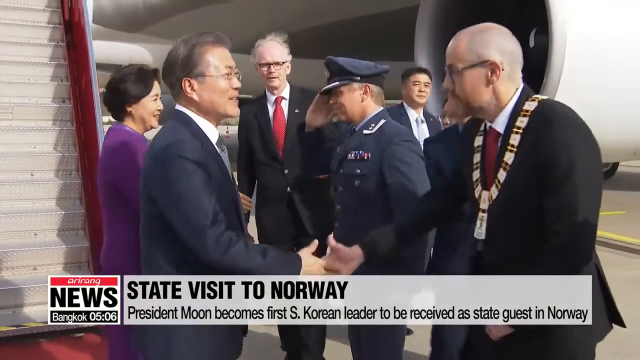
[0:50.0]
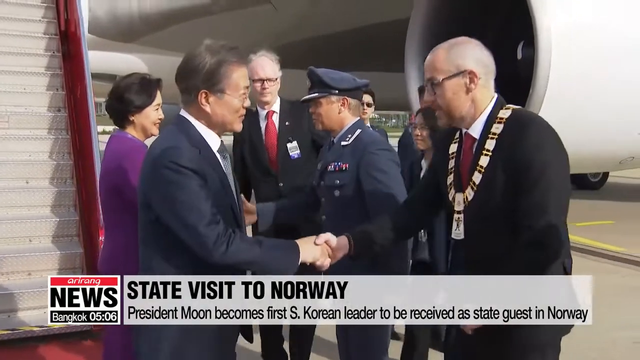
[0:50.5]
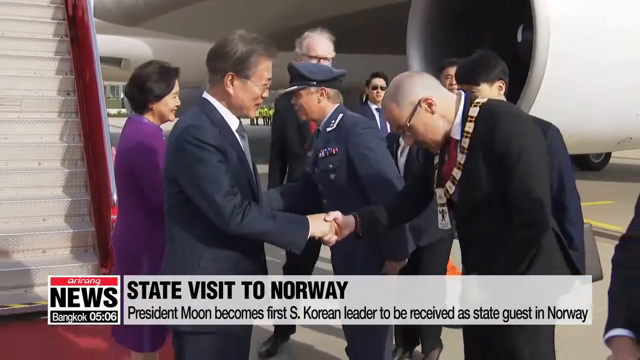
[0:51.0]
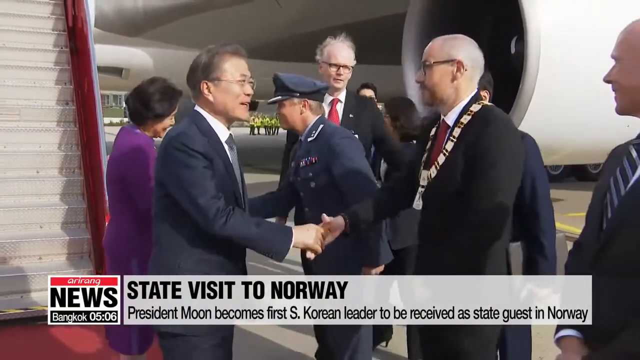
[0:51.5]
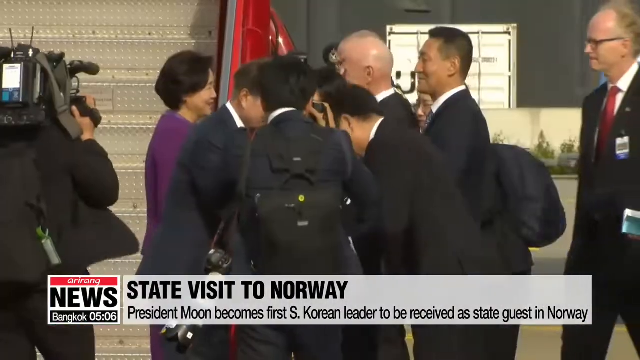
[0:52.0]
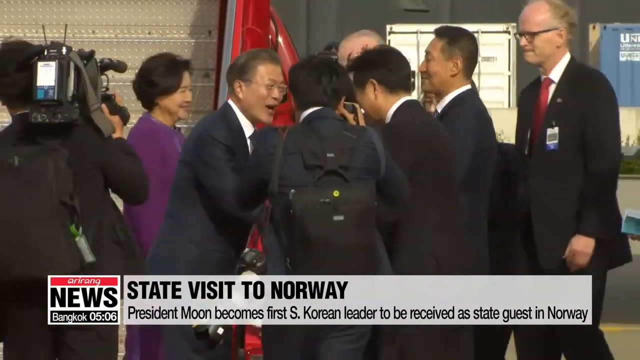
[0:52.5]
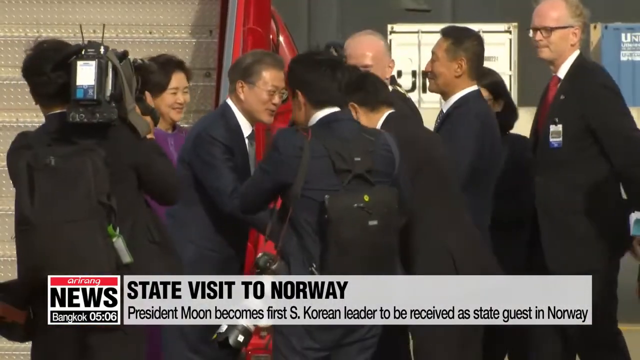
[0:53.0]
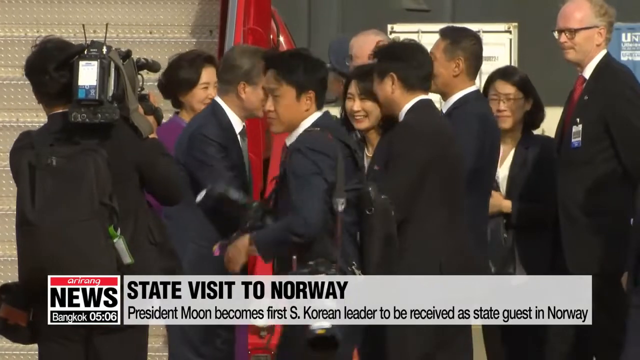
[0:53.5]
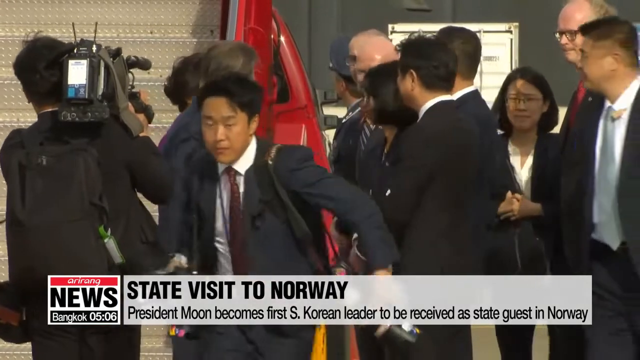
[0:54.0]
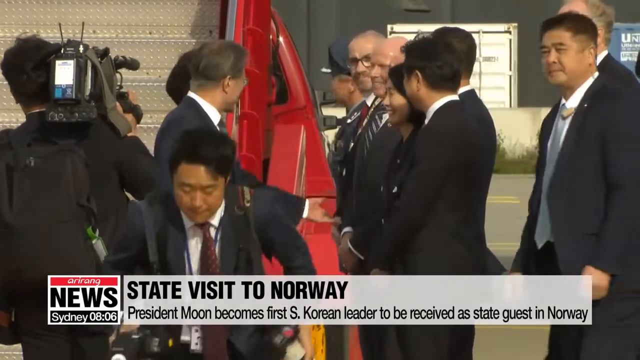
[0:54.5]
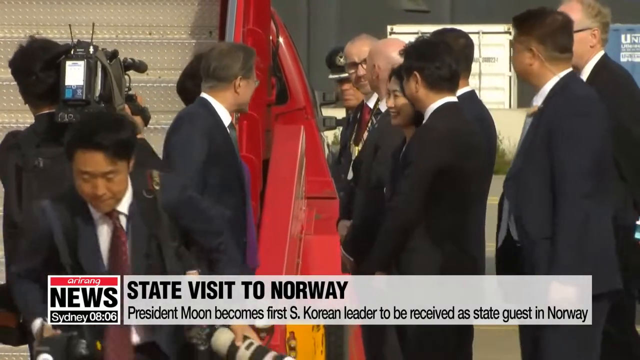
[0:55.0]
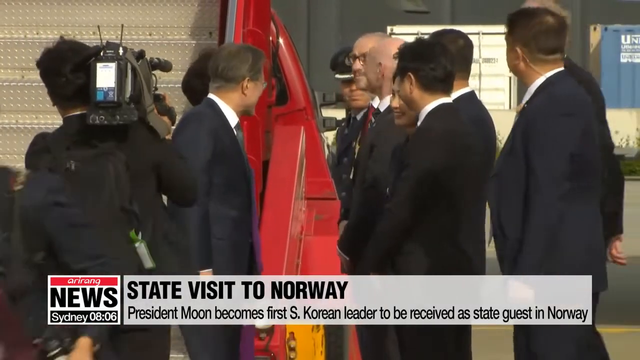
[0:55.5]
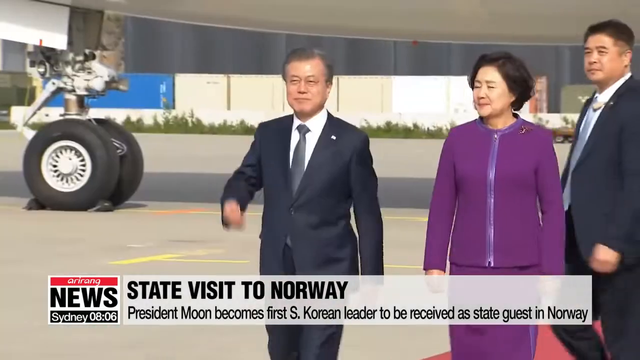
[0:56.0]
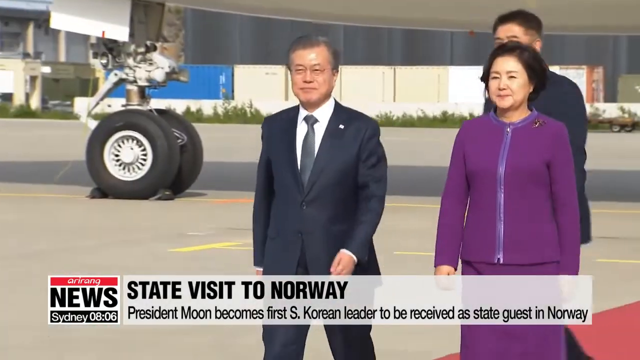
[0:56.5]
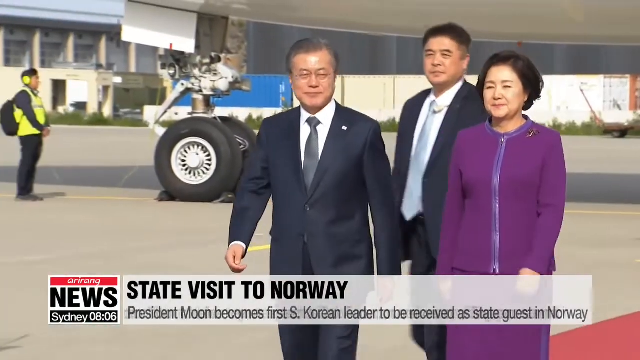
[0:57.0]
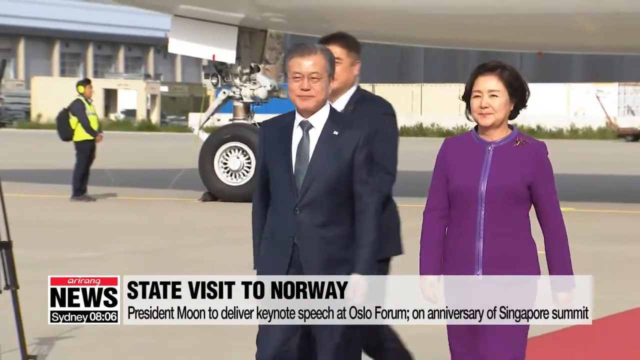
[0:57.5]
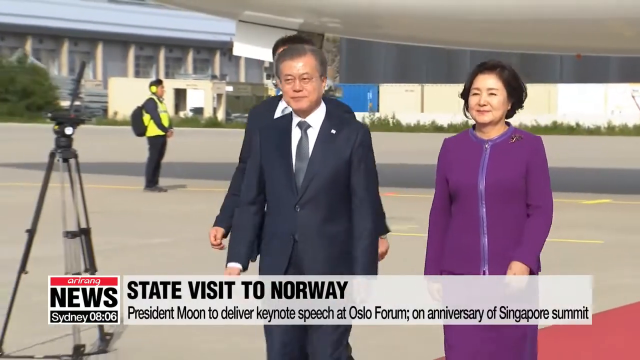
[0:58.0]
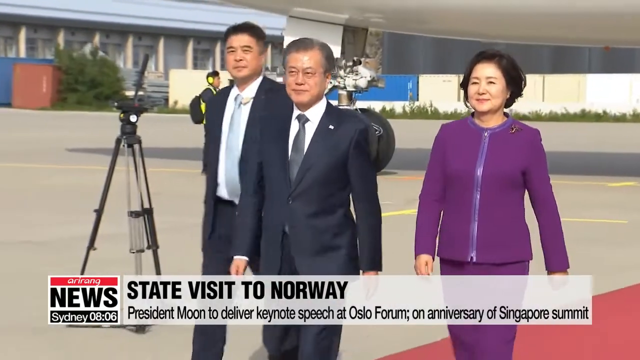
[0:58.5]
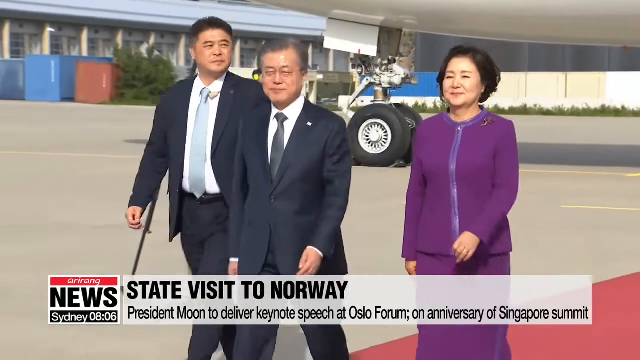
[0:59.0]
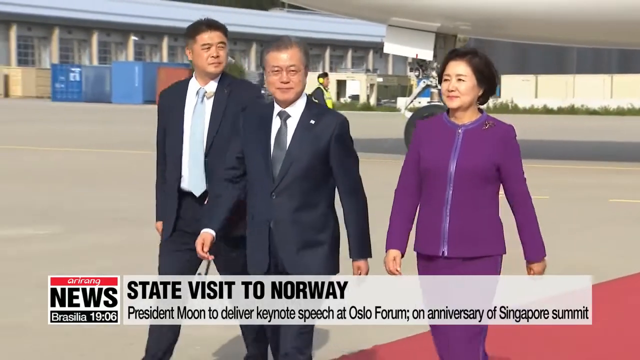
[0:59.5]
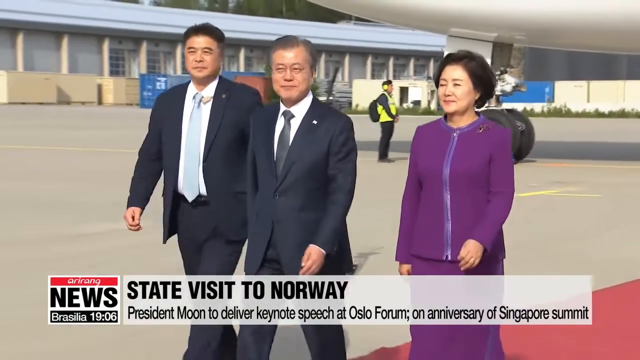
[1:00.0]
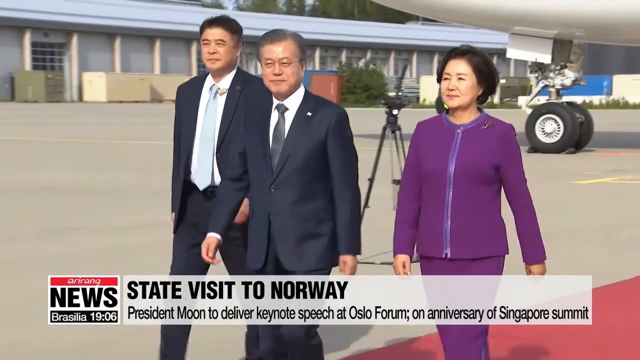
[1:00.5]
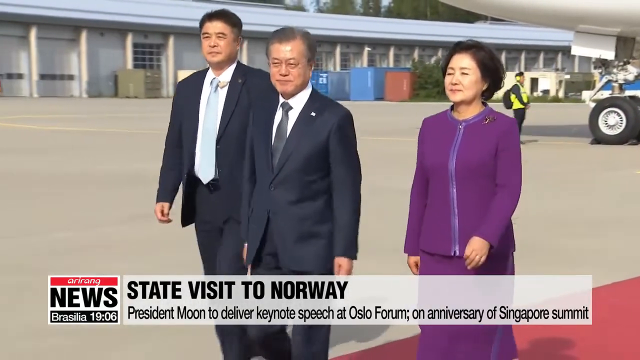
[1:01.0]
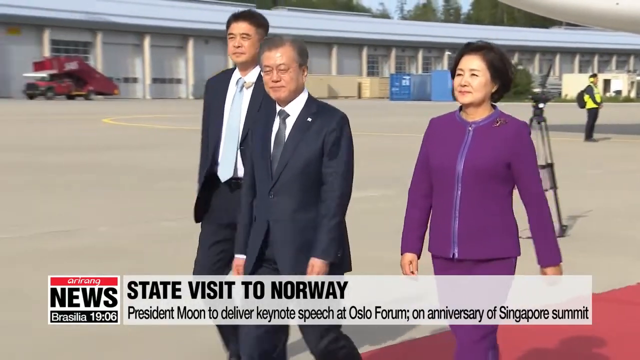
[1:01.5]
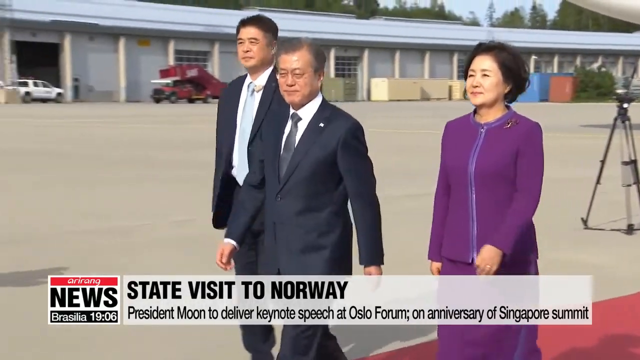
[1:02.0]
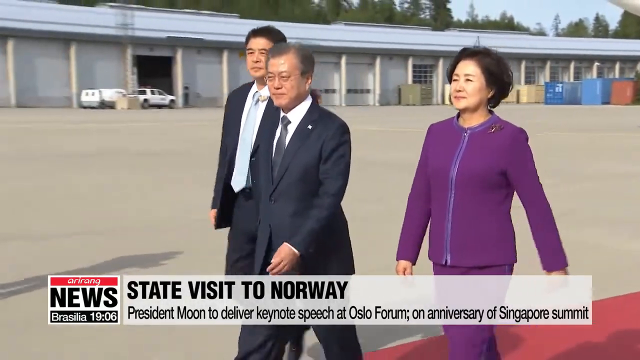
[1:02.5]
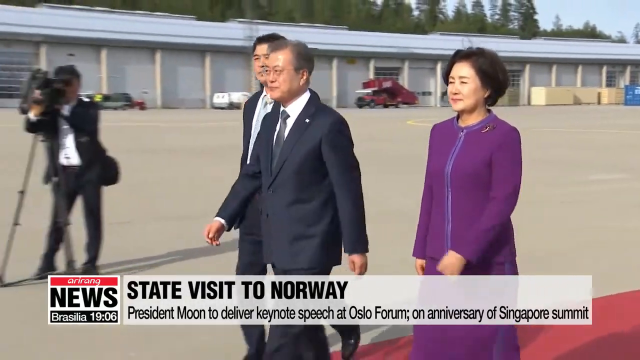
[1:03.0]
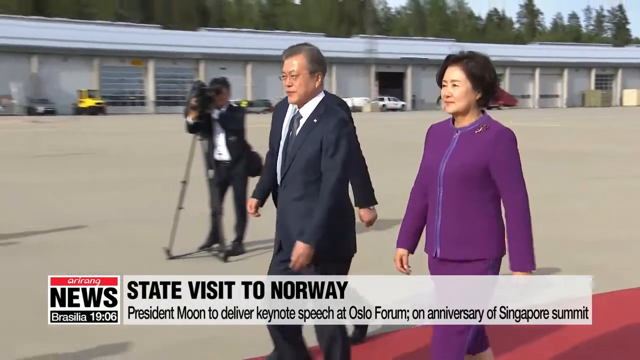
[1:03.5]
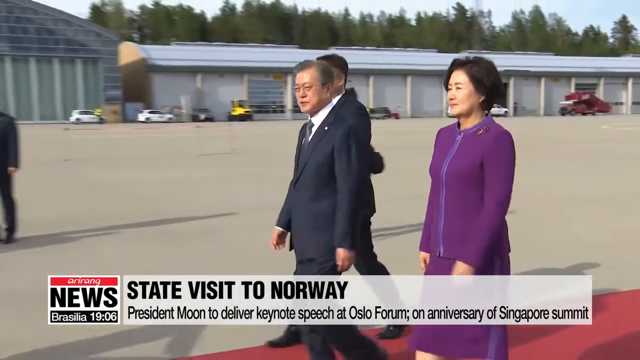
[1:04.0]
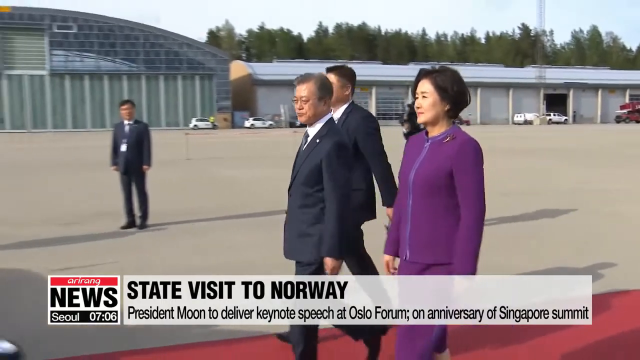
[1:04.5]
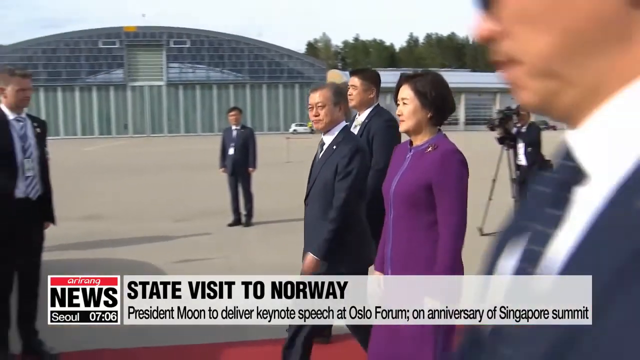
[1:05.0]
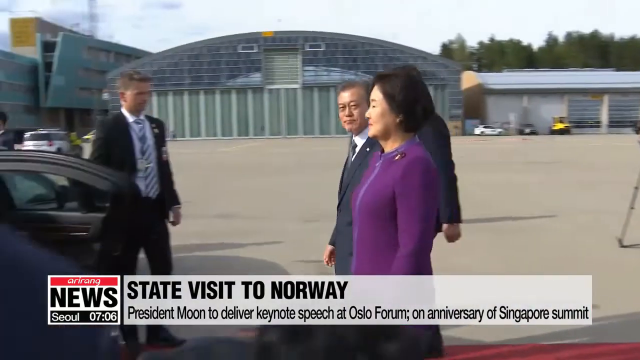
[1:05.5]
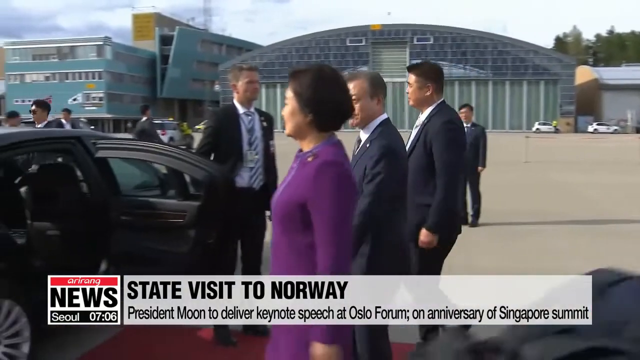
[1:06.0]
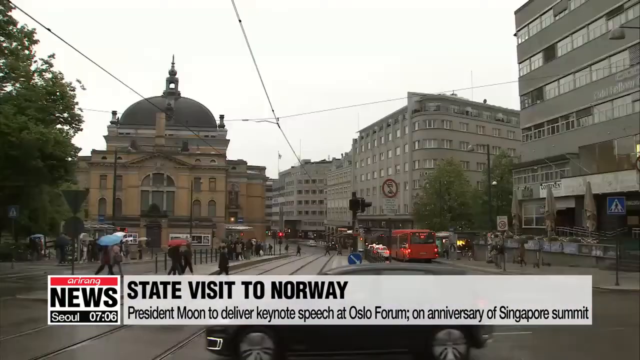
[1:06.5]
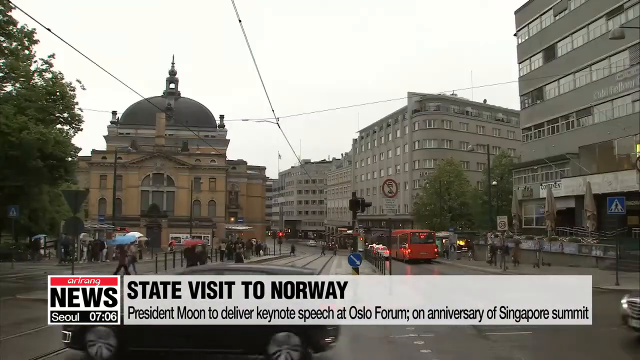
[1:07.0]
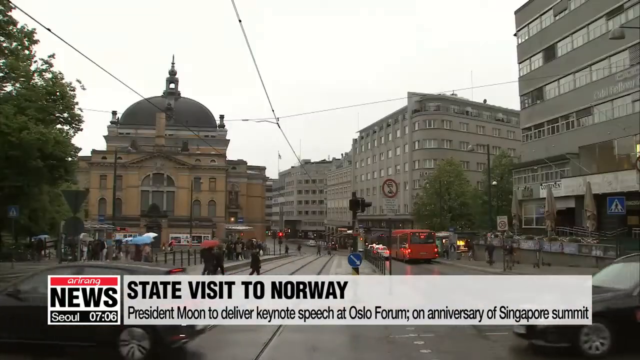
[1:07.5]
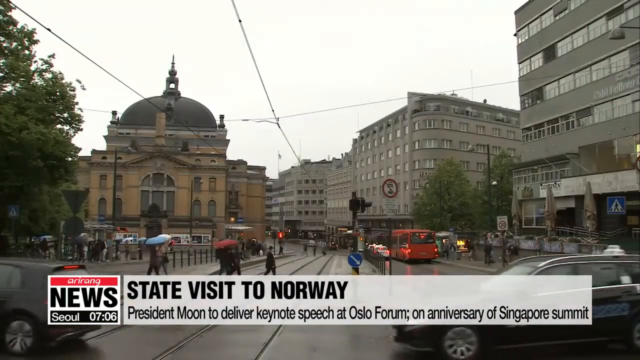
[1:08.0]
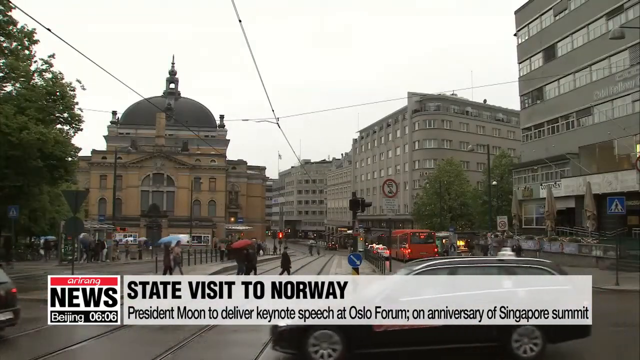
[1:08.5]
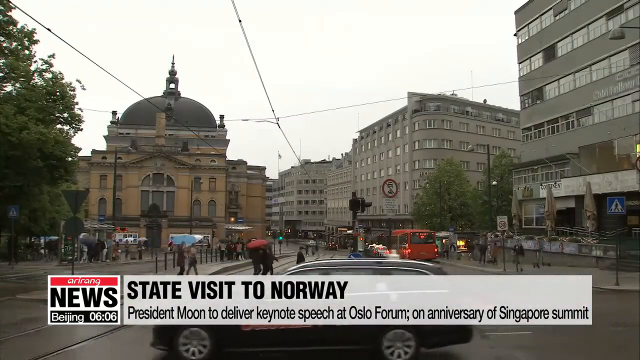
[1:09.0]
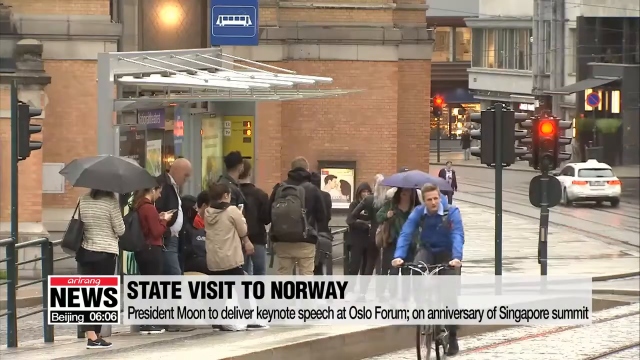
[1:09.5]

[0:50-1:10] The president and his wife are welcomed by people, both men and women, as they walk out of the airport. A man behind them is escorting them; he wears a black suit, a sky blue tie and a white shirt, while the wife wears a purple suit skirt. They all walk down the red carpet toward their car. A highway is shown, with several tall buildings, people in the street, moving cars and people on bicycles.